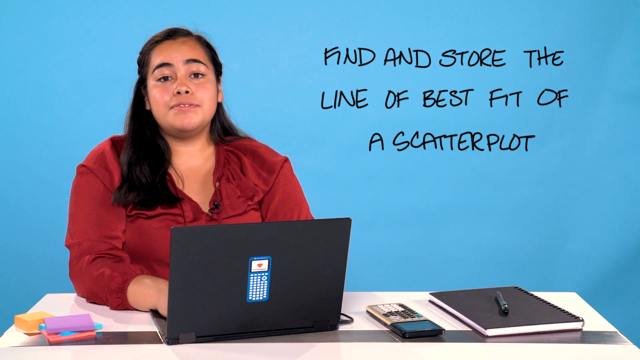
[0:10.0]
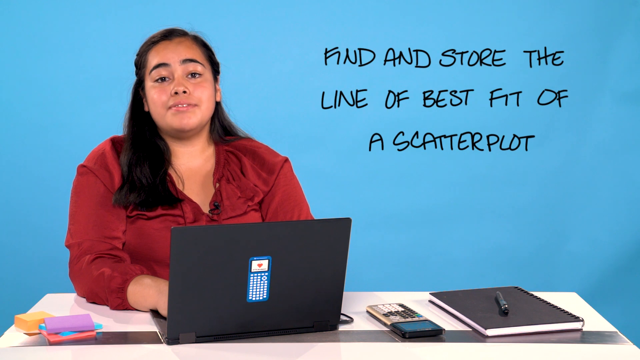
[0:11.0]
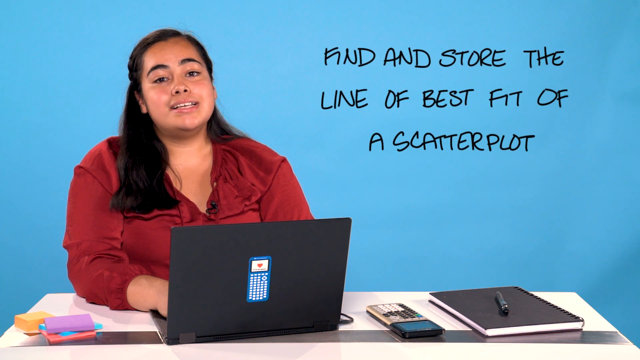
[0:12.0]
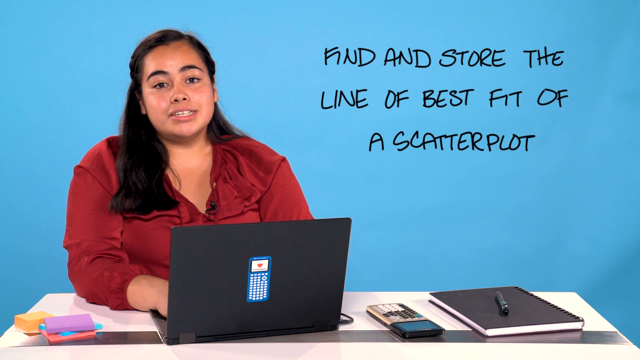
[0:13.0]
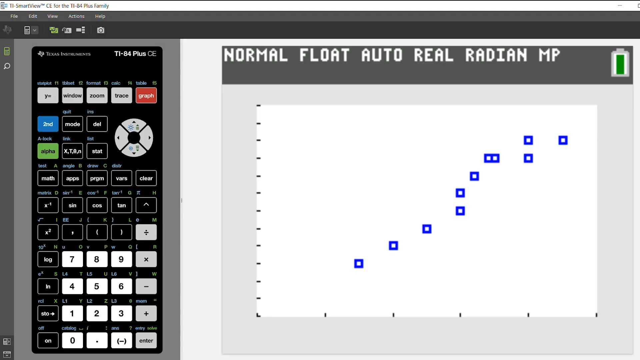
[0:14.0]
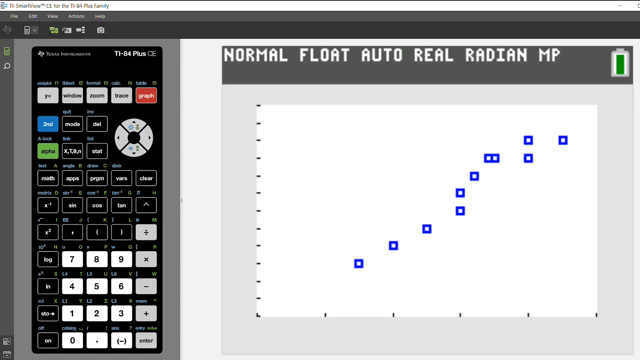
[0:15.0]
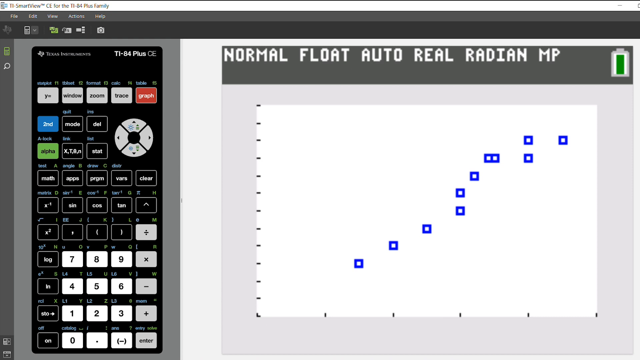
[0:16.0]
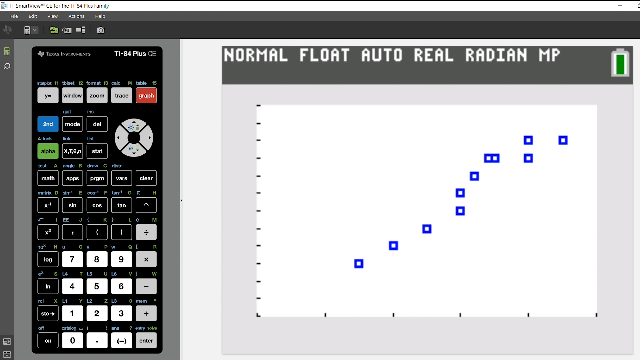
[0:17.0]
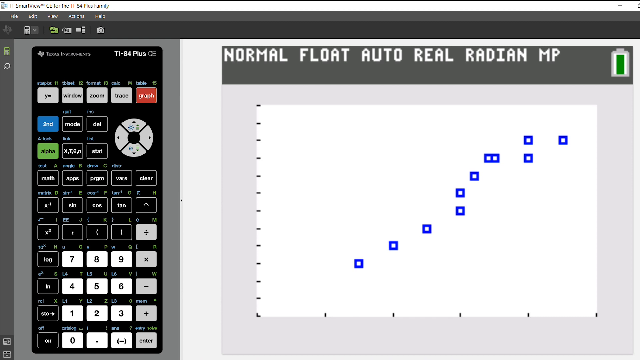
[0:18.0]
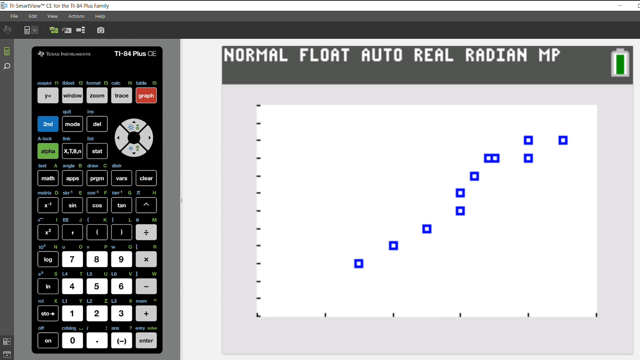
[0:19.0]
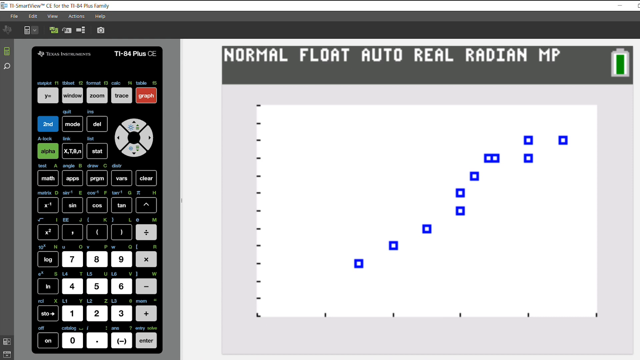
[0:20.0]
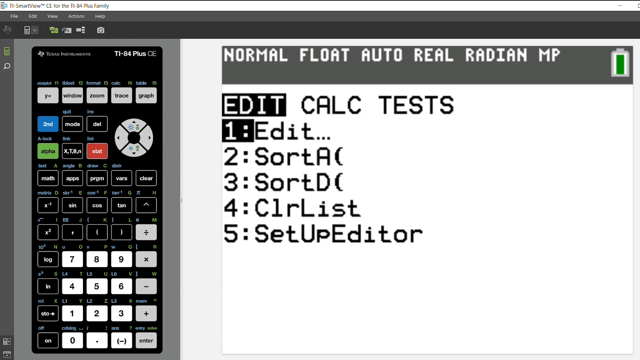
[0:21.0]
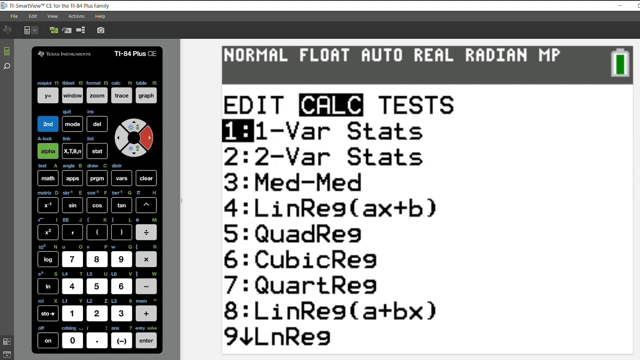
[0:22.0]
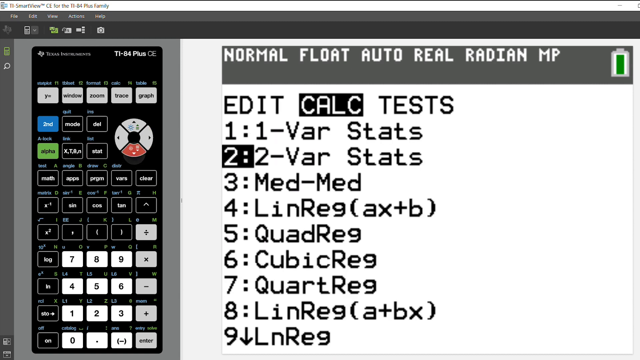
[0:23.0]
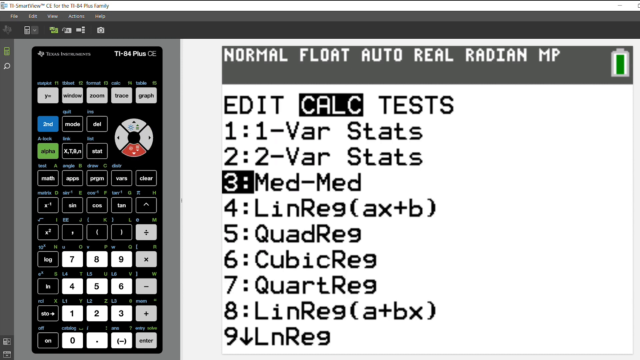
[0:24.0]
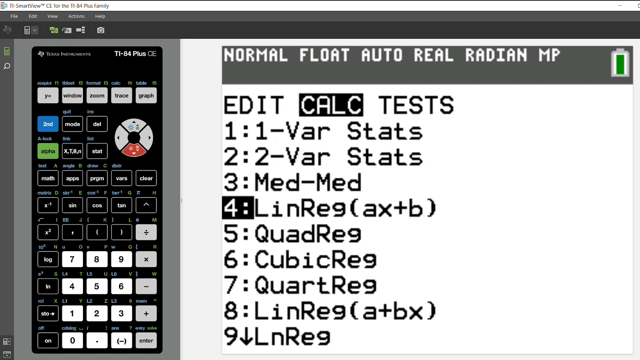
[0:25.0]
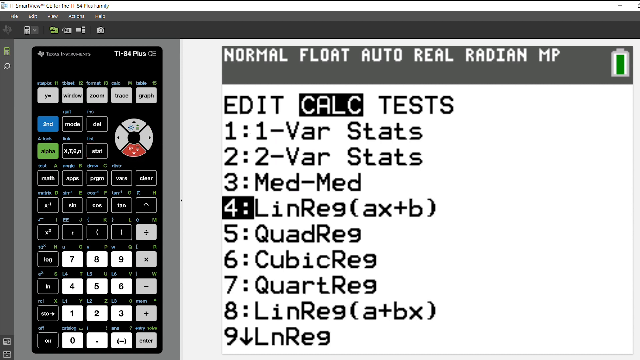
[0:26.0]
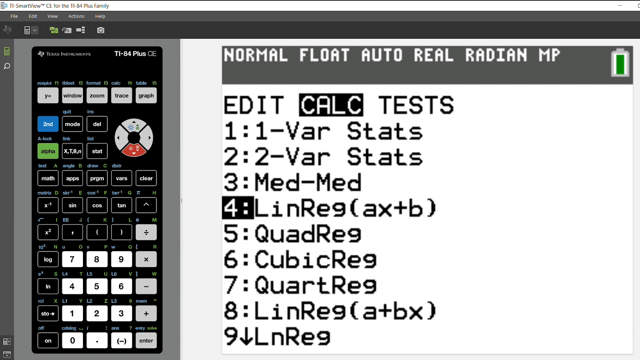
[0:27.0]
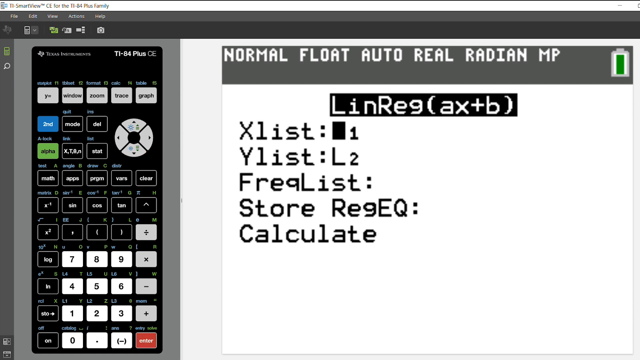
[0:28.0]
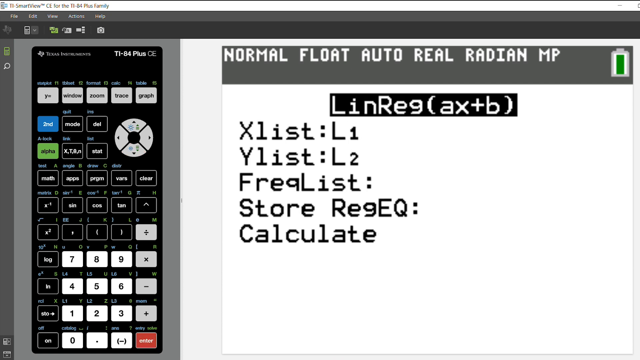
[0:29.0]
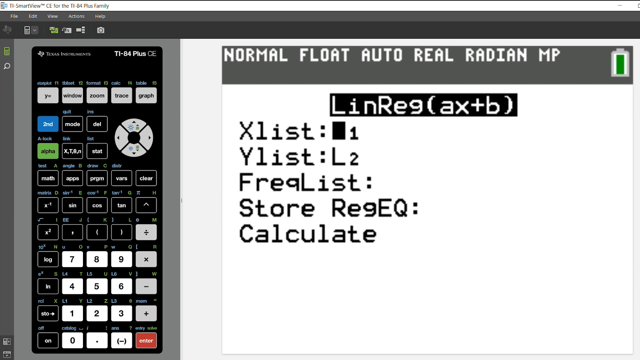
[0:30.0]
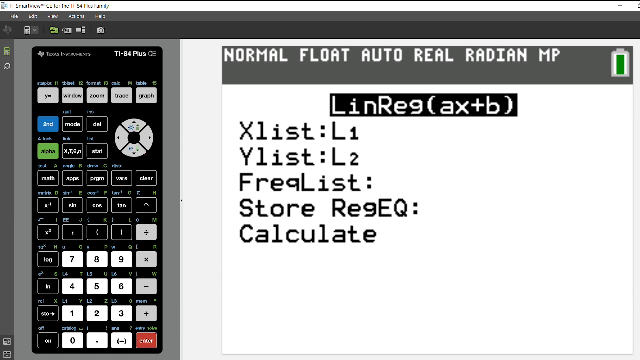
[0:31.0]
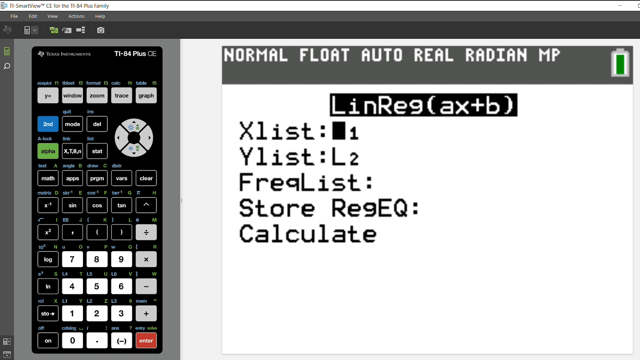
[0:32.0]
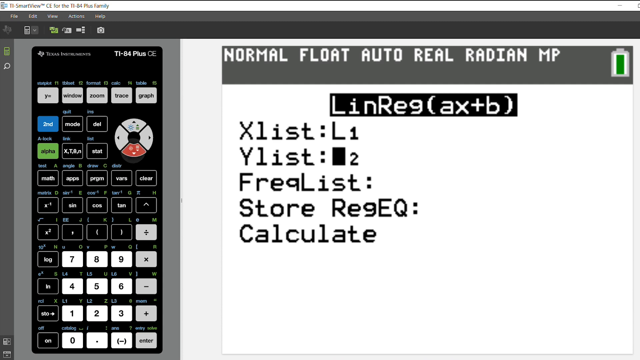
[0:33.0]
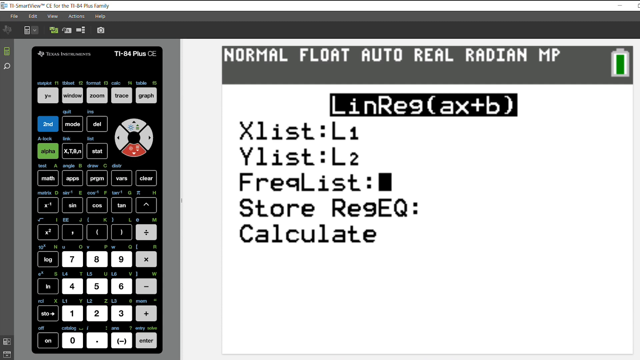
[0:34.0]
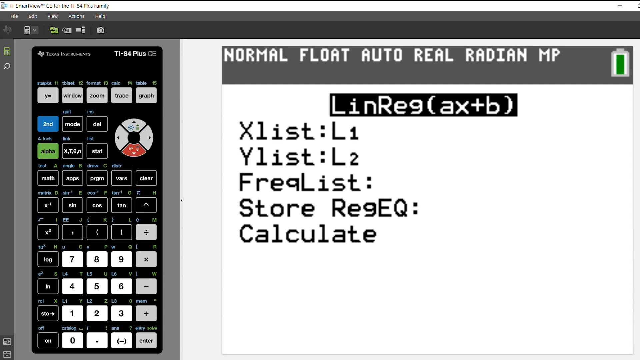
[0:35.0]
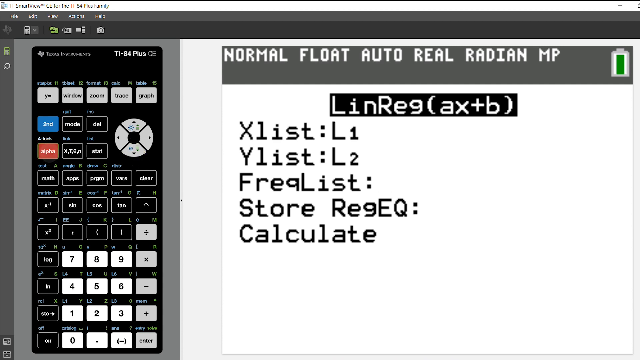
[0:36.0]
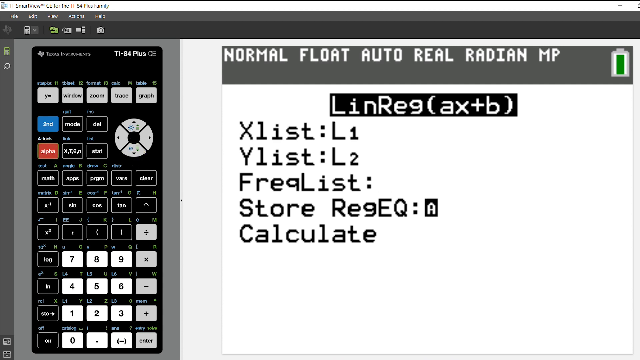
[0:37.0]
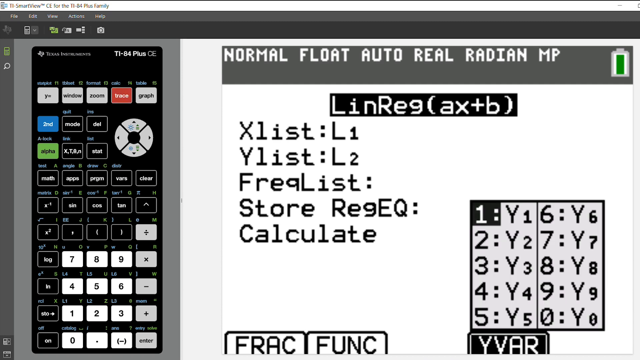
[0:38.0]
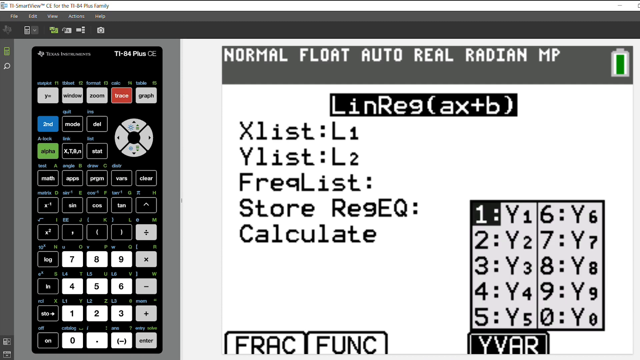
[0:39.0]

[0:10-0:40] The woman introduces herself, and the title about finding and storing the line of best fit of the scatter plot appears. Next, a picture of a calculator screen is shown with a graph and the words "normal float auto real radian mp" along with calculations. The graph looks like it is increasing, going upwards from low to high. A list and a table are shown, with Y values from Y1 to Y5. It looks like a mathematics method is being explained, and the calculator, which is black, looks like a scientific calculator.